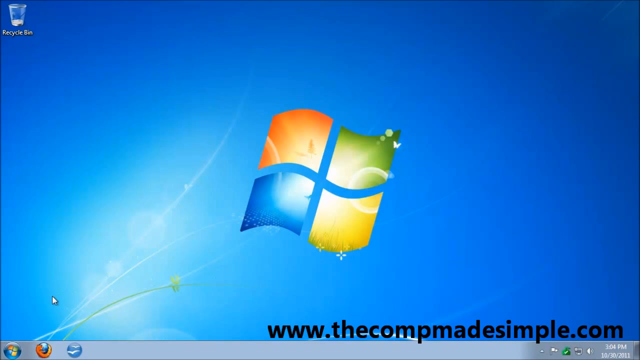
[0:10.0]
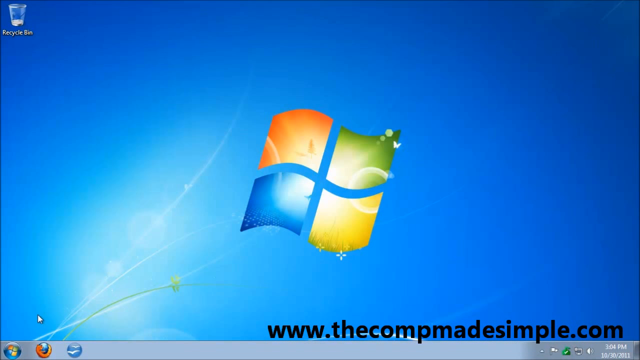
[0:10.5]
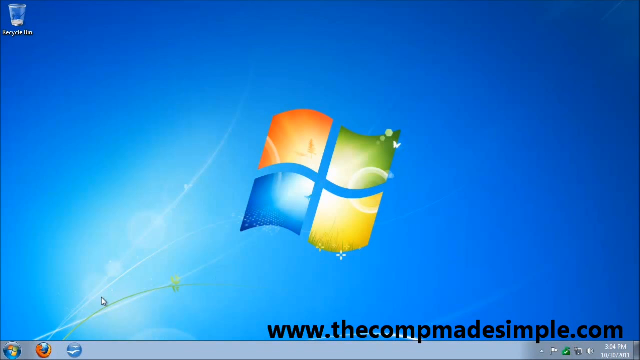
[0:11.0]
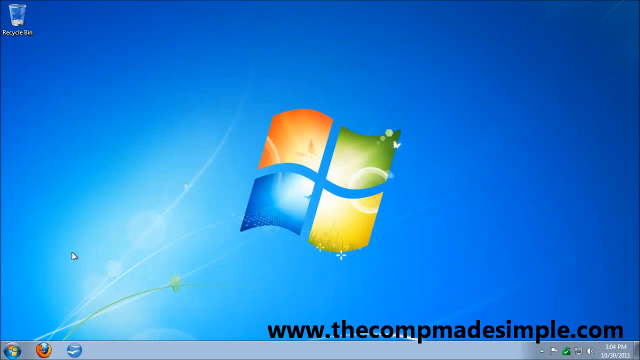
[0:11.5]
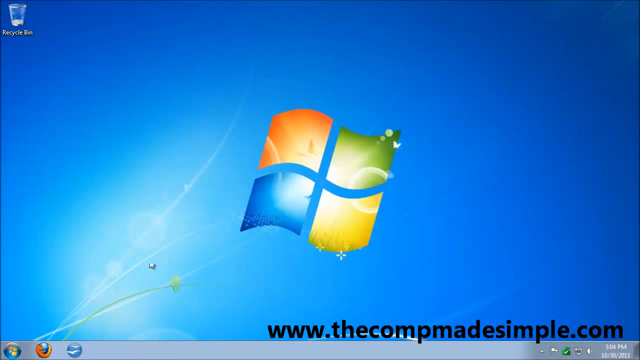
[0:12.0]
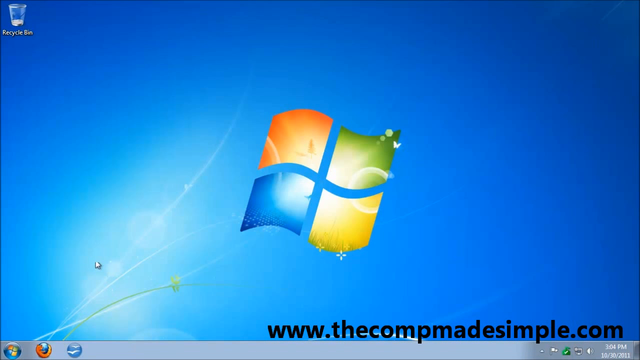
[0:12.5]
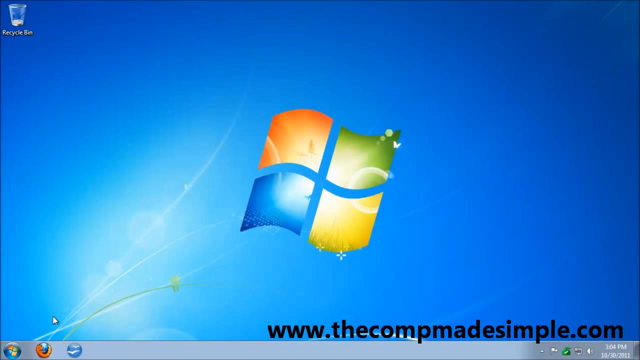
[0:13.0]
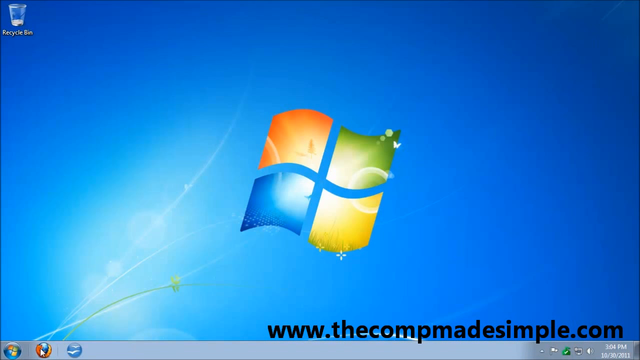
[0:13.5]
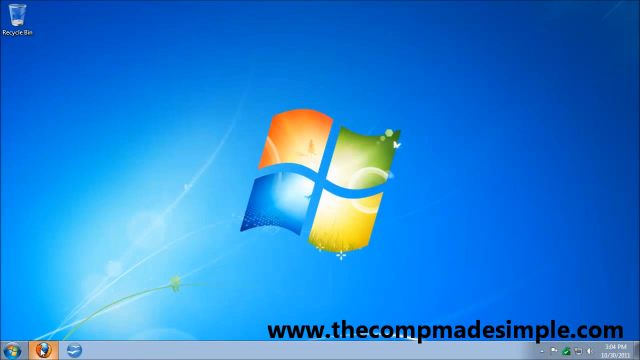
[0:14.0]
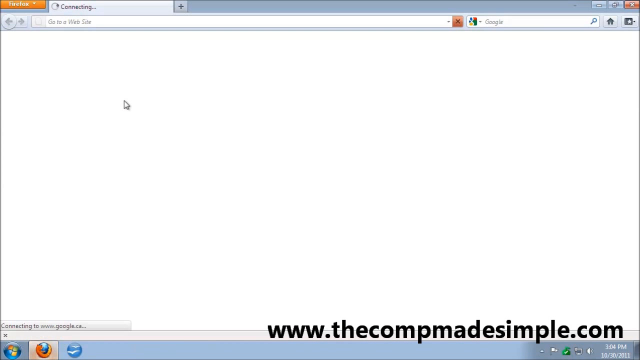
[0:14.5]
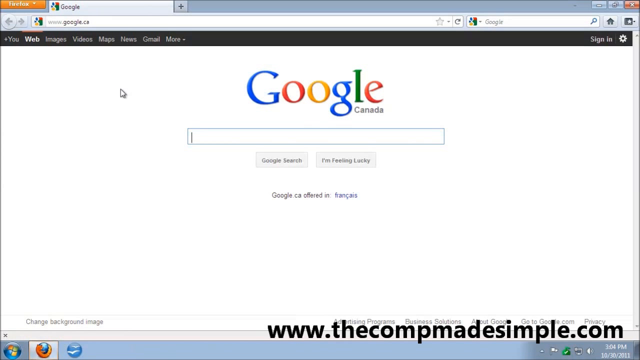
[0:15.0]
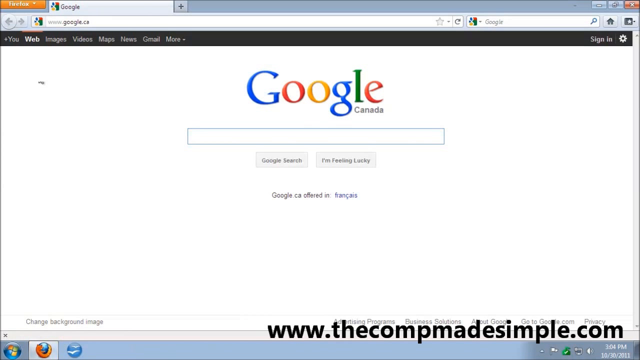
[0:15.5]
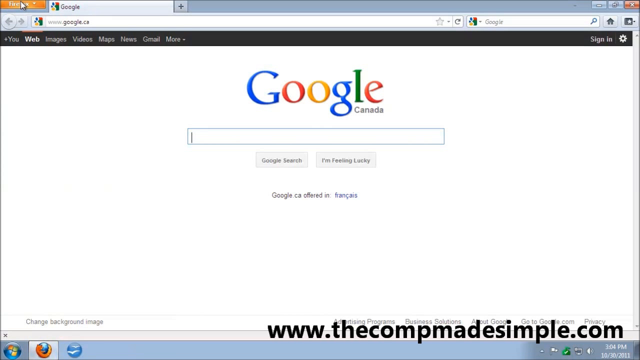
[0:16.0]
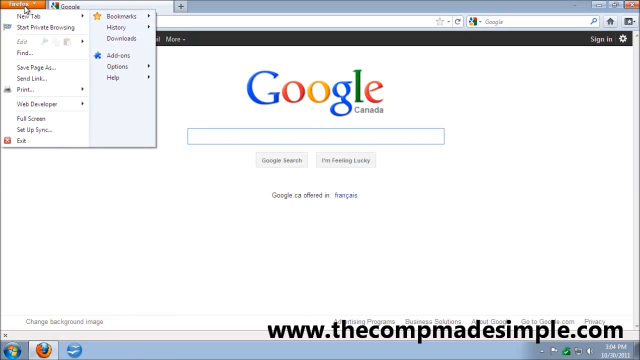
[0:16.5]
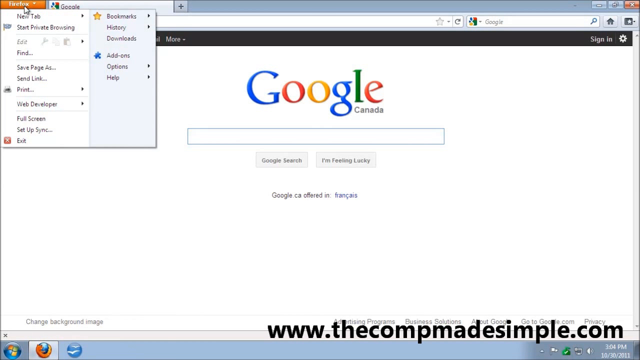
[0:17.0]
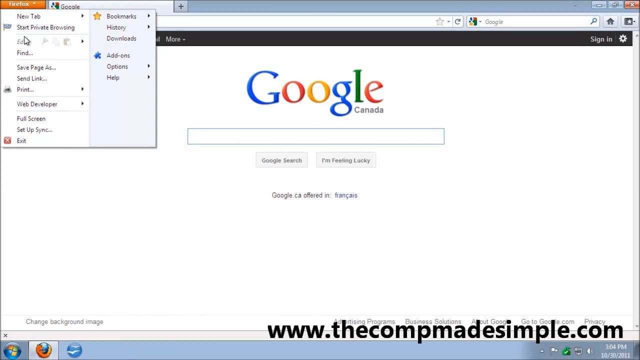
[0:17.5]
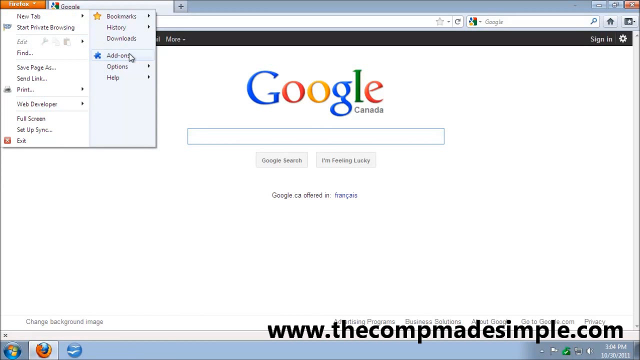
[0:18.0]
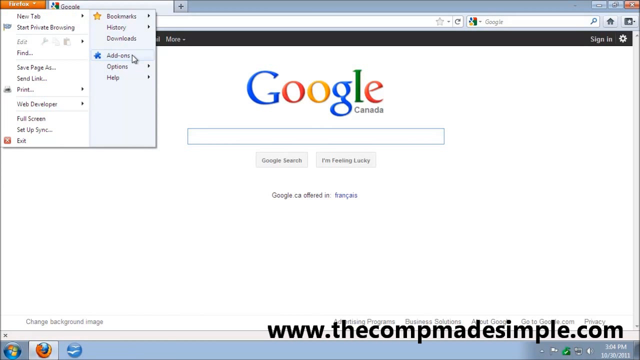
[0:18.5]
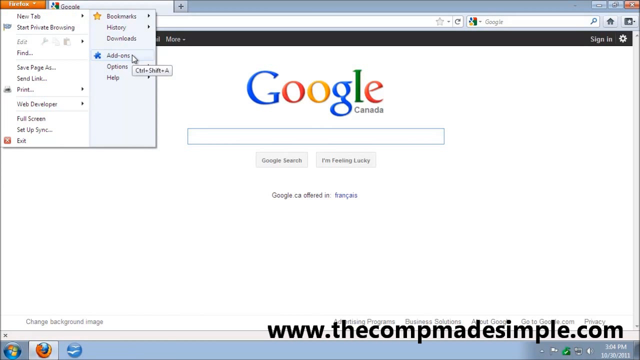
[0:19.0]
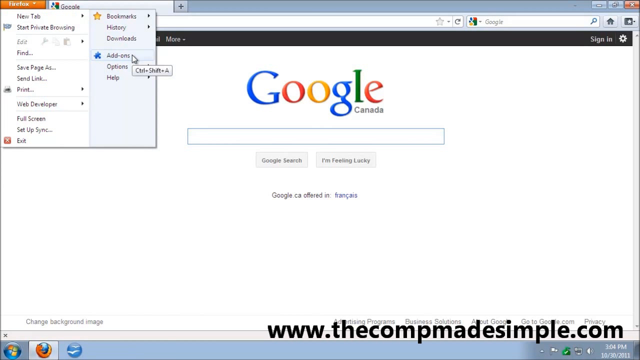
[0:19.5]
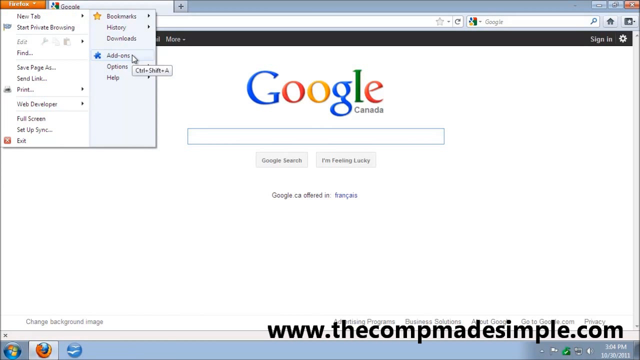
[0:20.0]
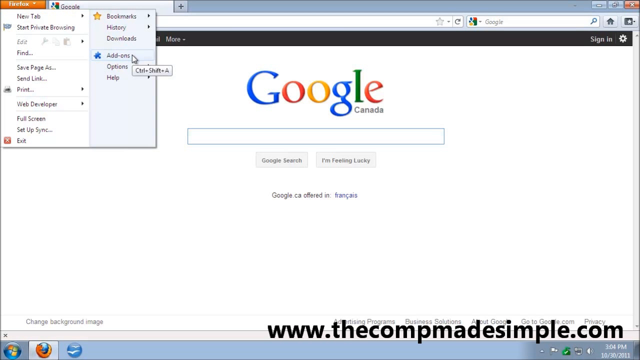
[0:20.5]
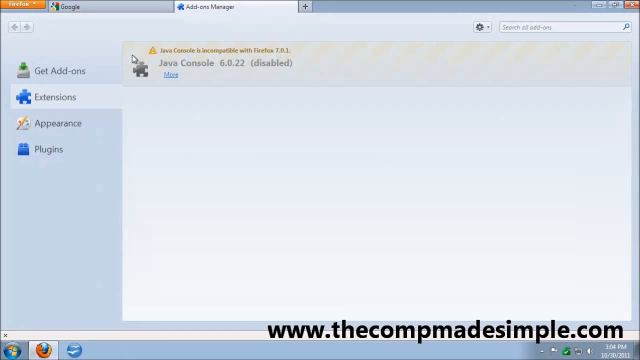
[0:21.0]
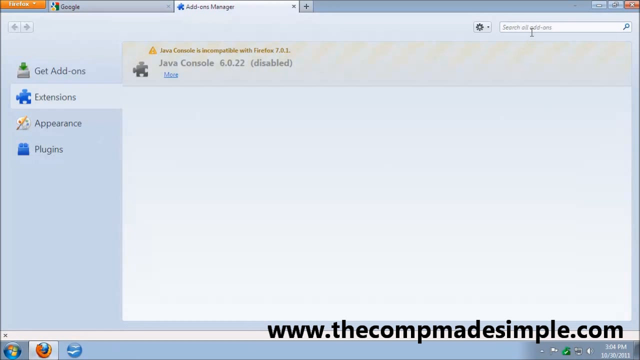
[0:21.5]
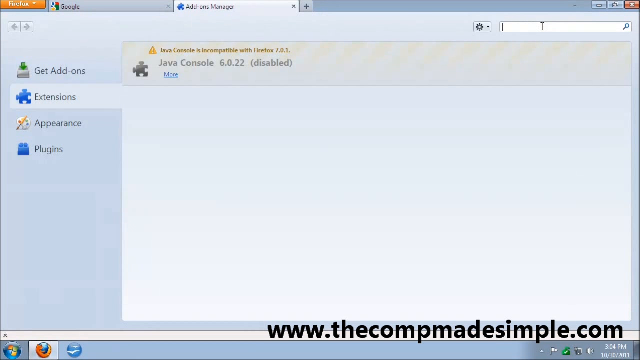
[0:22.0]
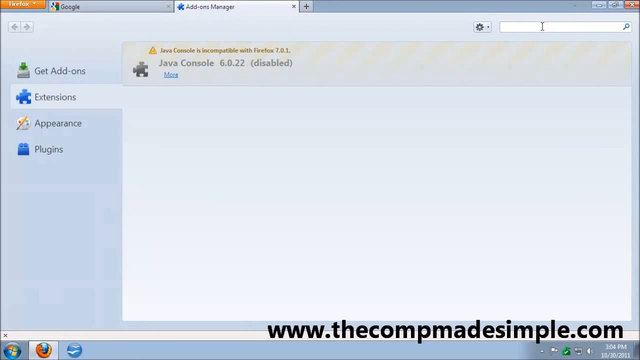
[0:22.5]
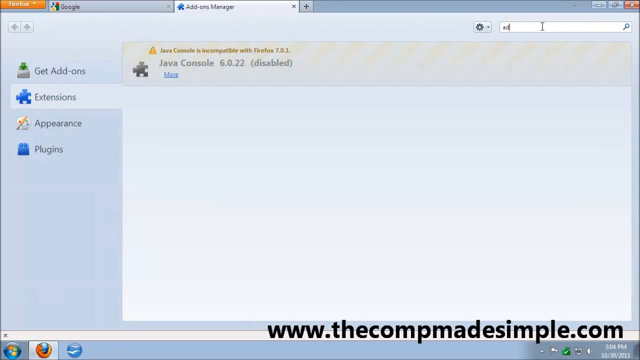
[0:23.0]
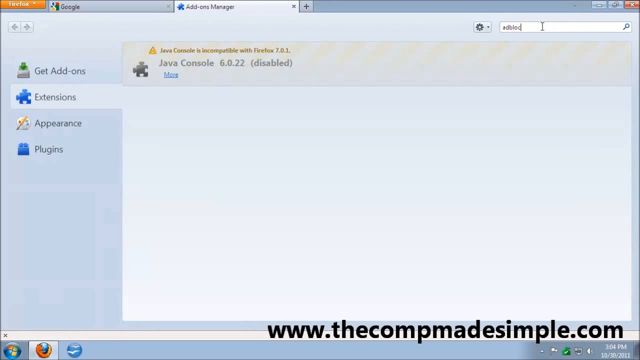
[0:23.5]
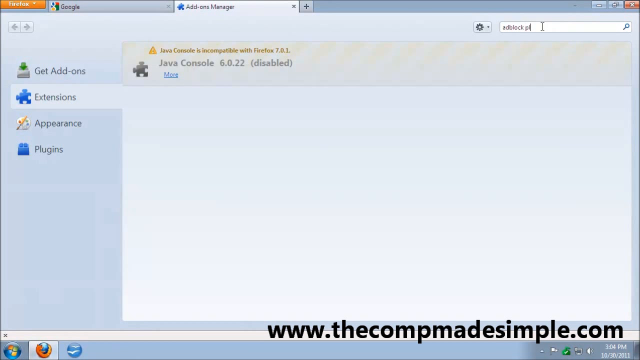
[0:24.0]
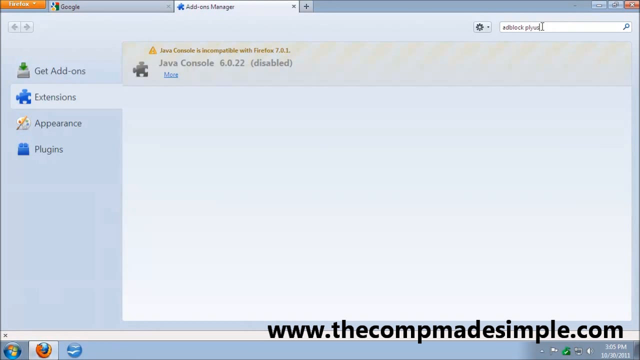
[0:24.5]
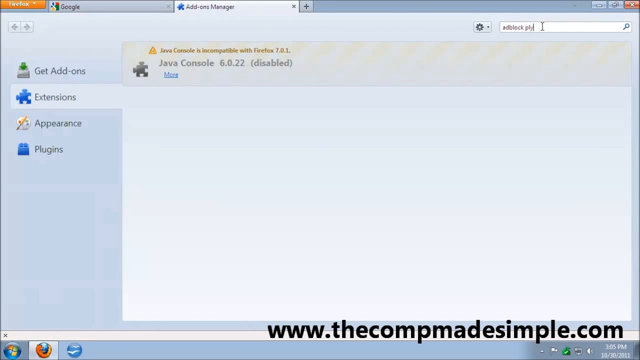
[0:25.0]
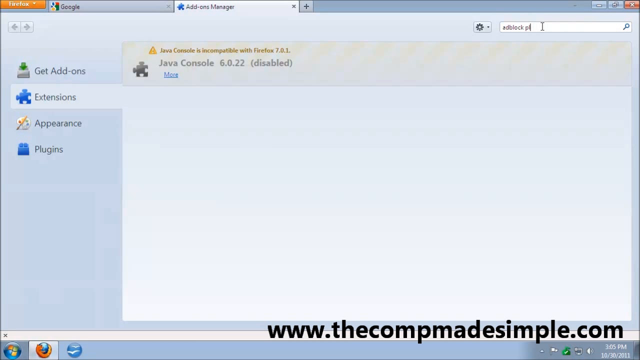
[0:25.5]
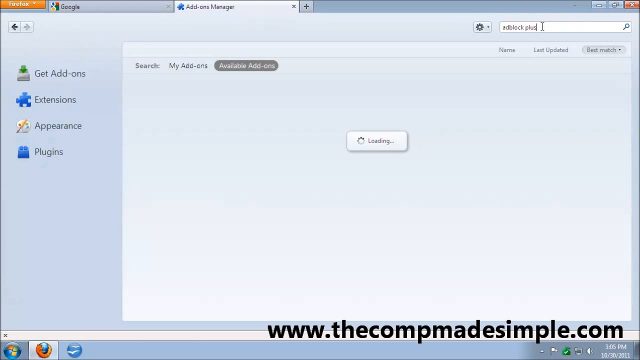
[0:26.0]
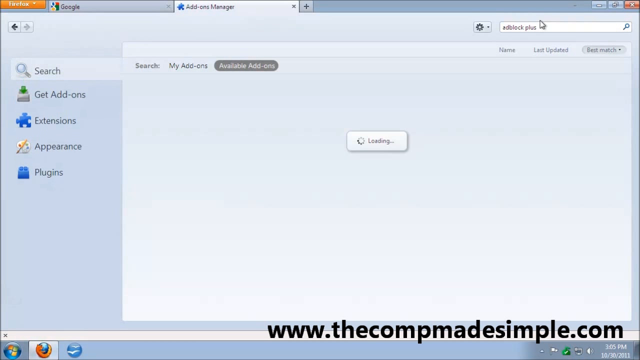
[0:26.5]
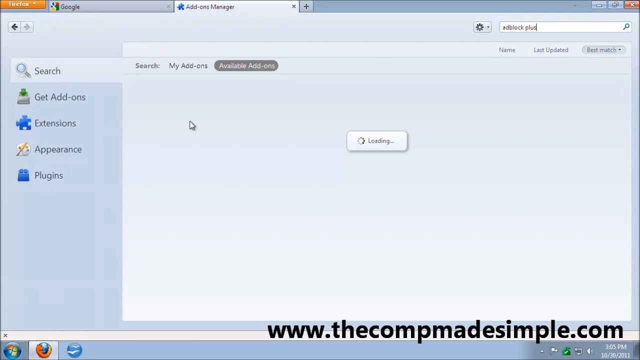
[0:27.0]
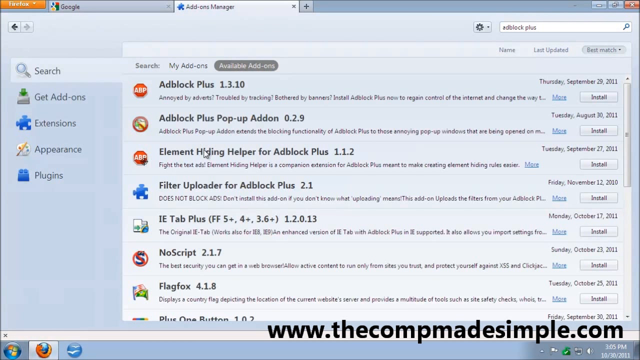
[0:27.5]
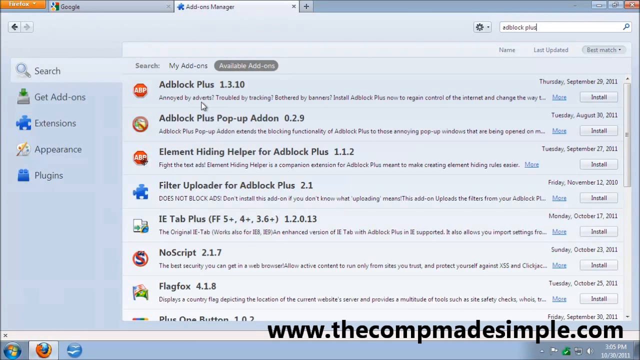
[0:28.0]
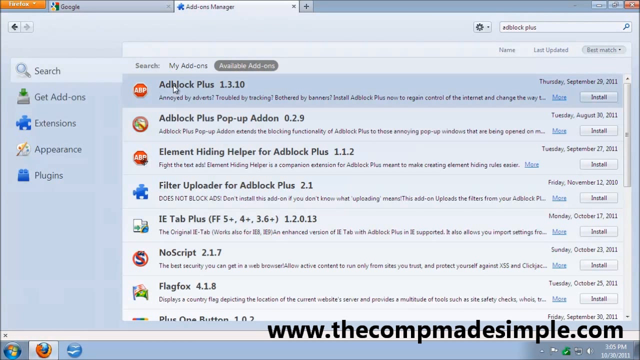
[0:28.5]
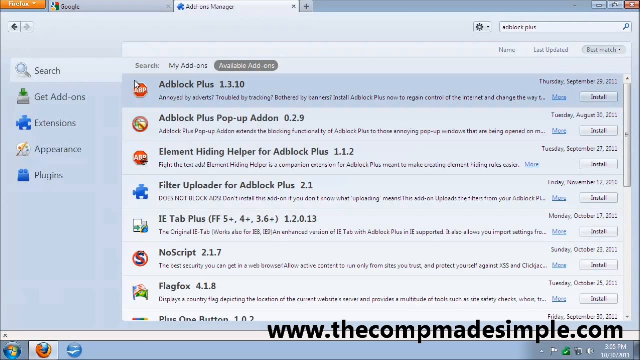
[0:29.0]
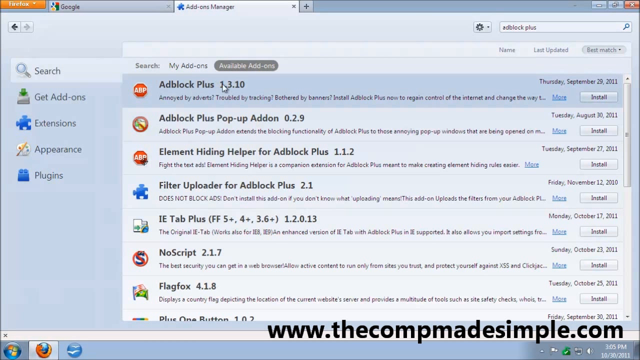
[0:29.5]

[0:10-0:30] The Windows desktop shows the Windows logo in the center and the recycle bin in the upper left corner, with a mouse pointer moving around in the lower left corner. Eventually a web page opens in Firefox, with the Firefox symbol in the upper left corner of the browser. The browser is at Google.ca, showing the Google Canada search engine. The user clicks the menu button, the Firefox button in the upper left, moves the pointer to the add-ons button in the menu and clicks it, which opens the add-ons manager page. In the search box in the upper right corner of that page, they type AdBlock Plus and search, and the mouse pointer hovers over the AdBlock Plus search entry.